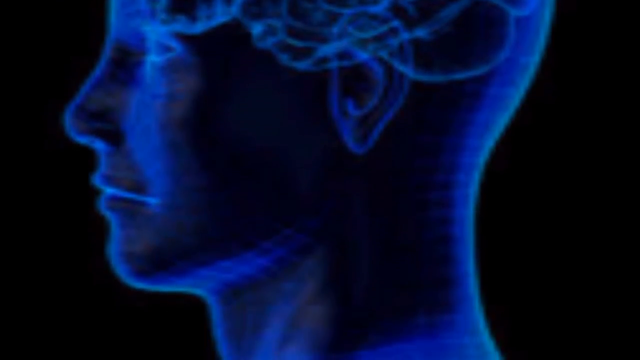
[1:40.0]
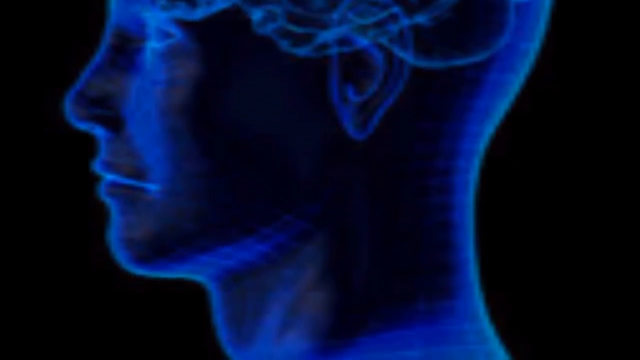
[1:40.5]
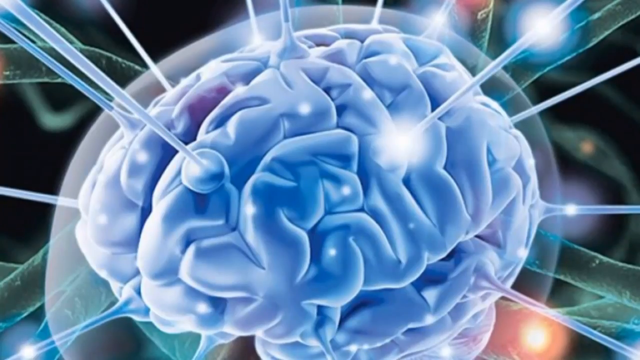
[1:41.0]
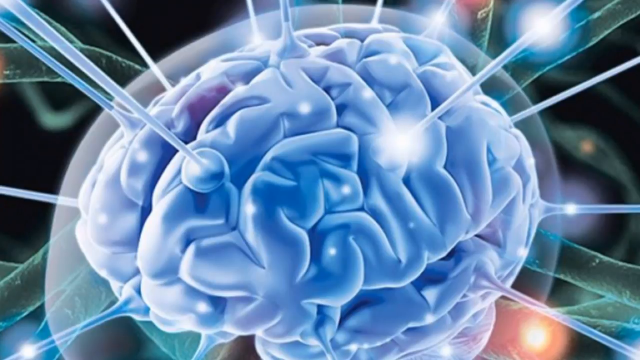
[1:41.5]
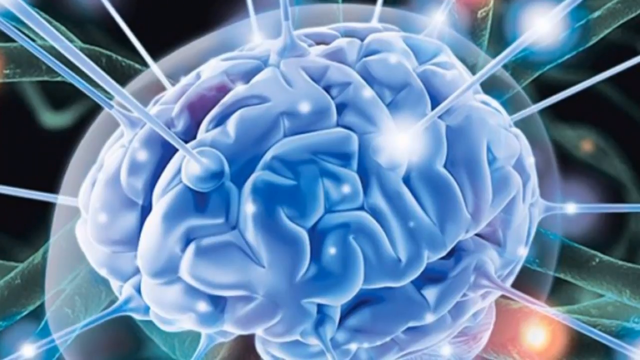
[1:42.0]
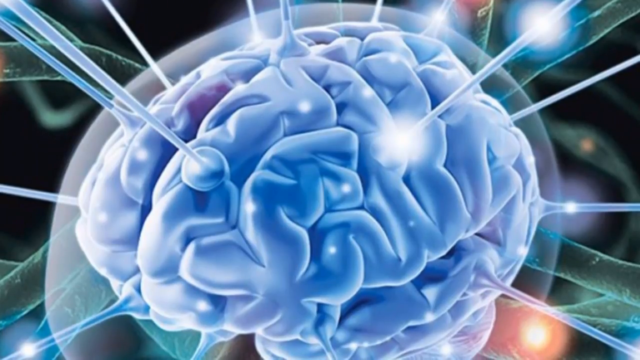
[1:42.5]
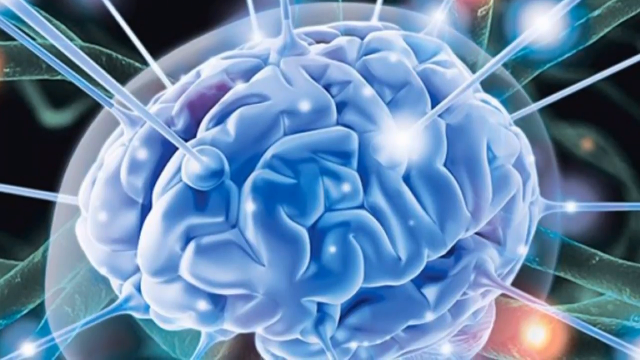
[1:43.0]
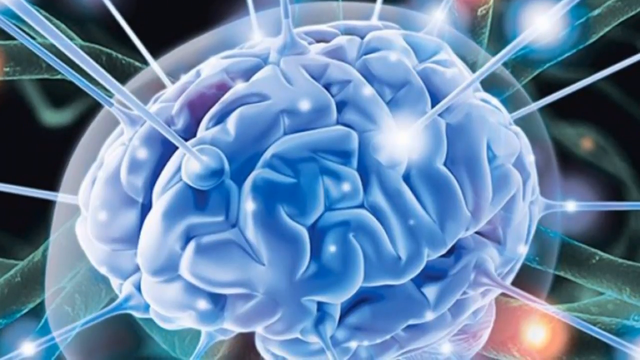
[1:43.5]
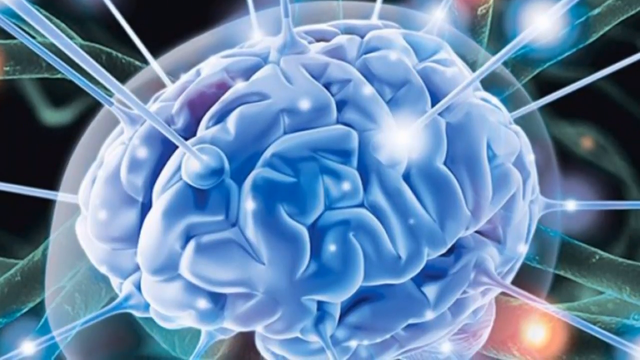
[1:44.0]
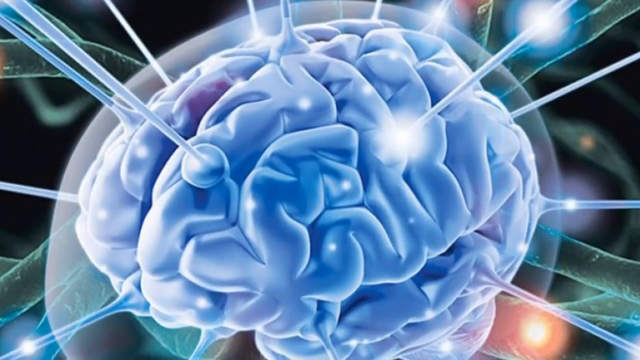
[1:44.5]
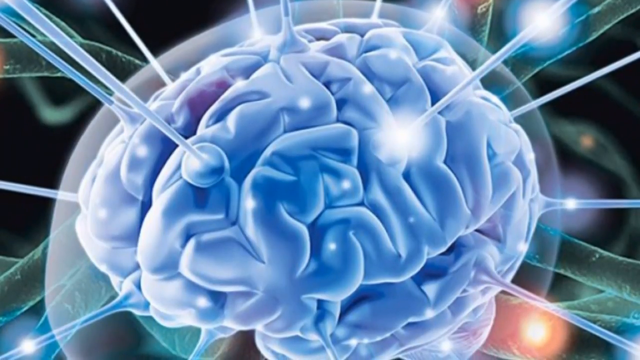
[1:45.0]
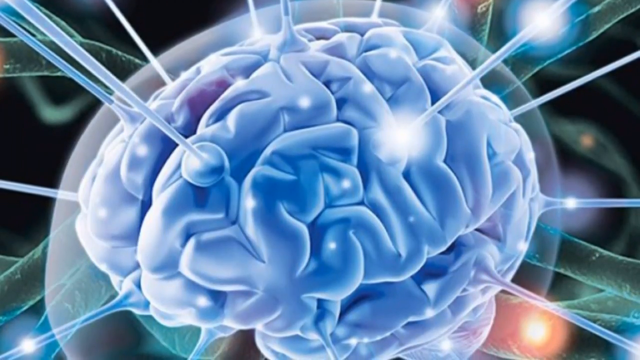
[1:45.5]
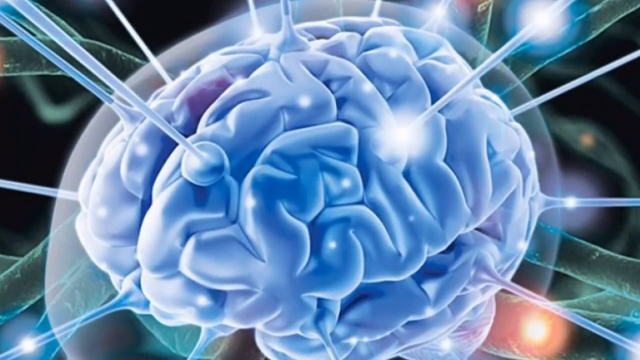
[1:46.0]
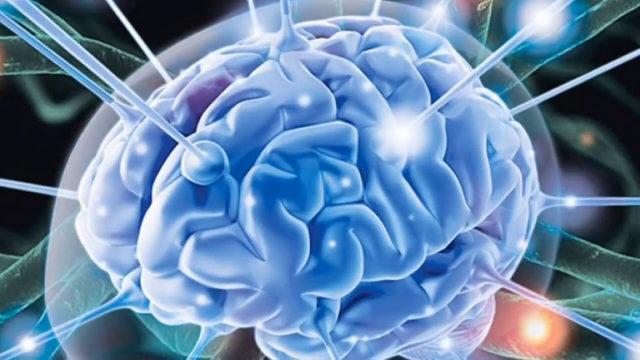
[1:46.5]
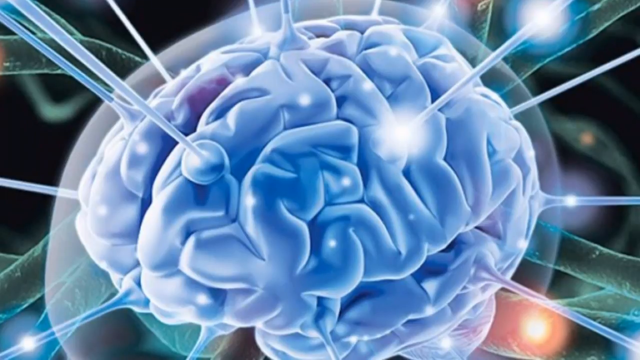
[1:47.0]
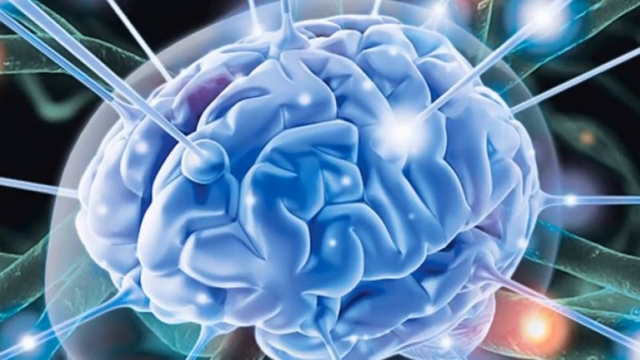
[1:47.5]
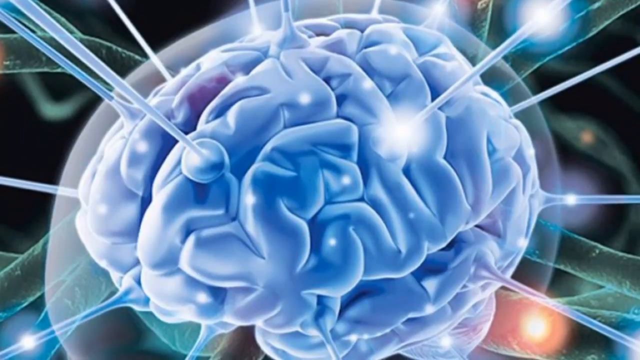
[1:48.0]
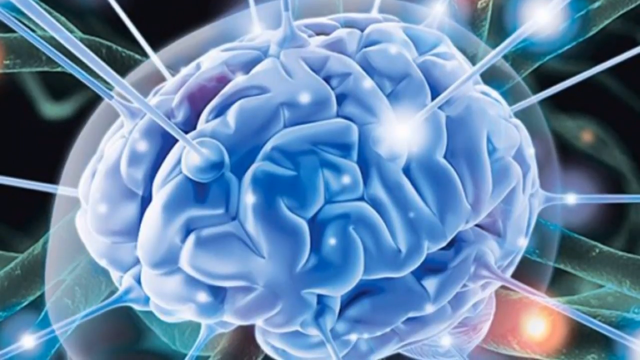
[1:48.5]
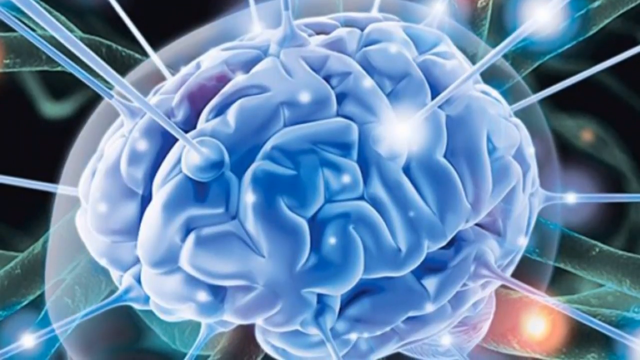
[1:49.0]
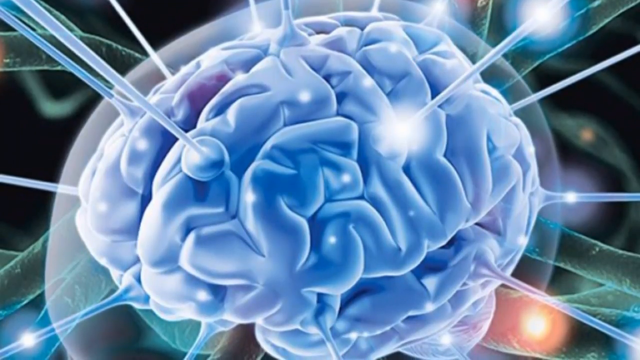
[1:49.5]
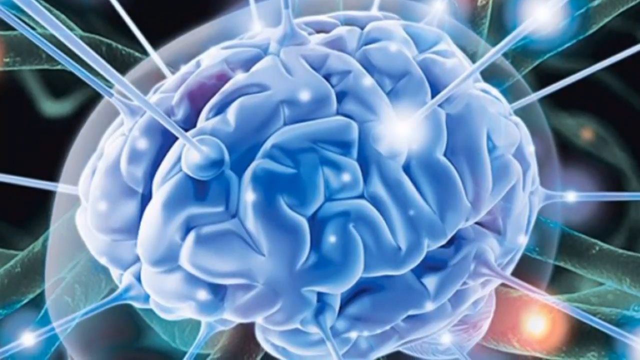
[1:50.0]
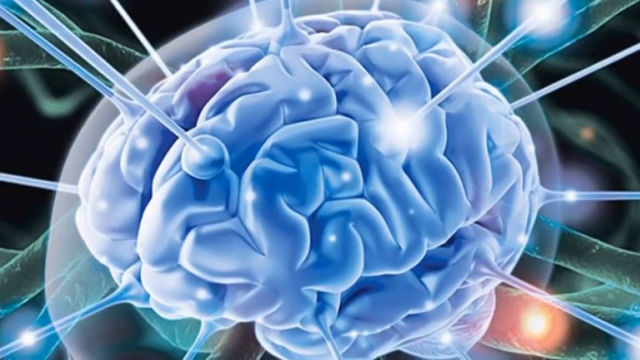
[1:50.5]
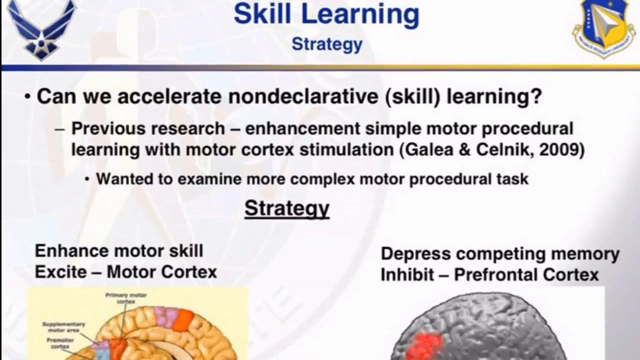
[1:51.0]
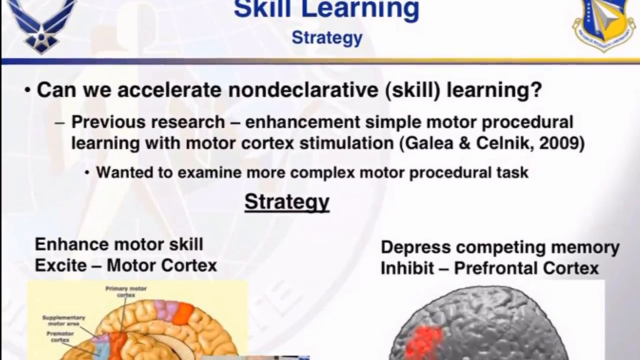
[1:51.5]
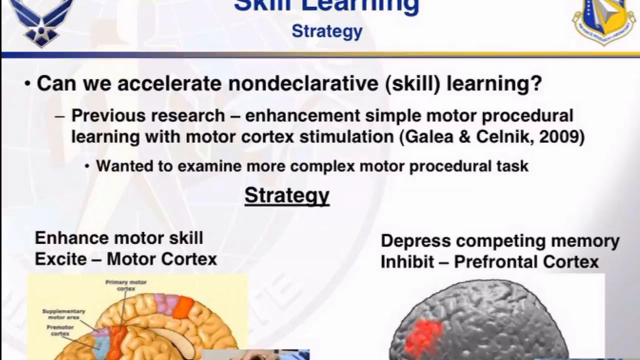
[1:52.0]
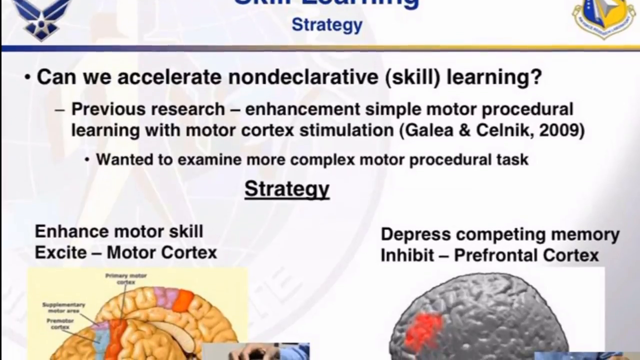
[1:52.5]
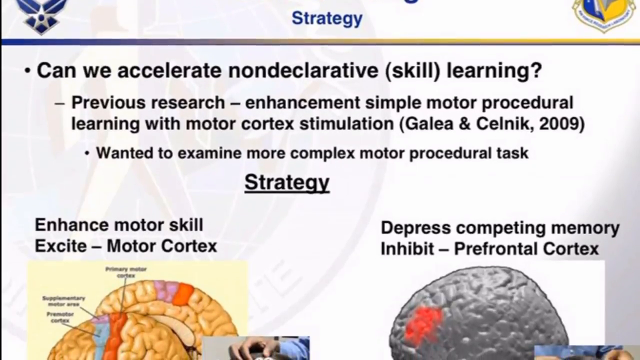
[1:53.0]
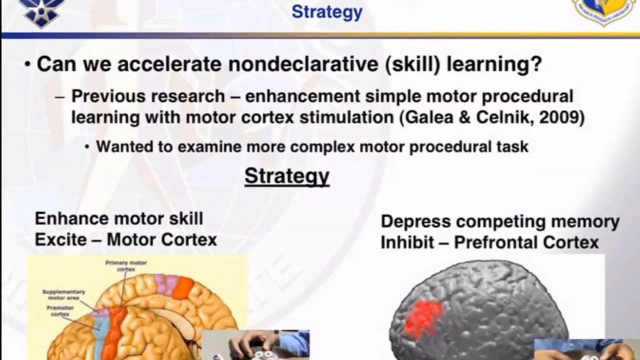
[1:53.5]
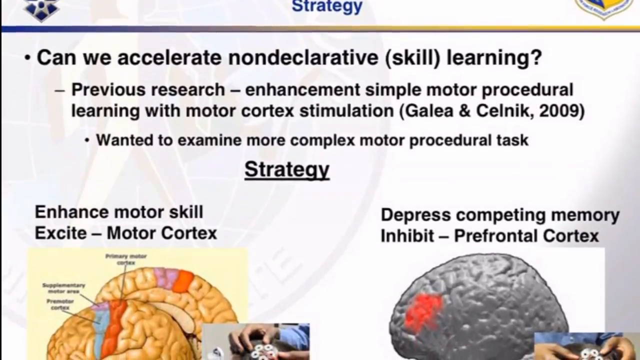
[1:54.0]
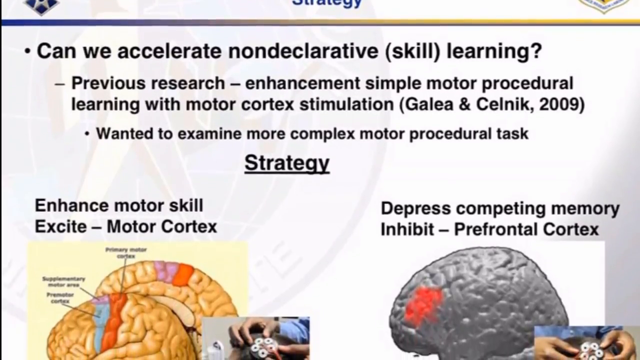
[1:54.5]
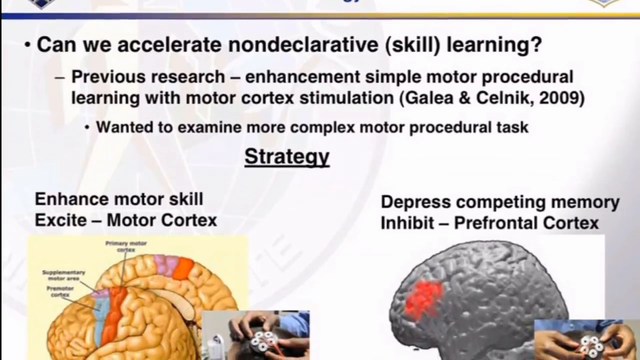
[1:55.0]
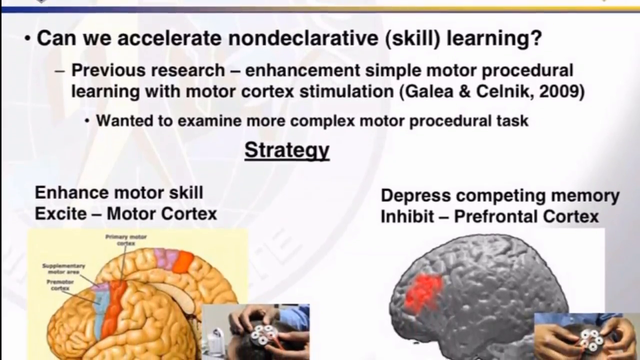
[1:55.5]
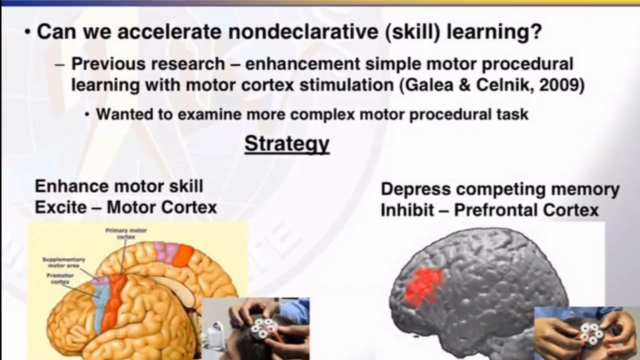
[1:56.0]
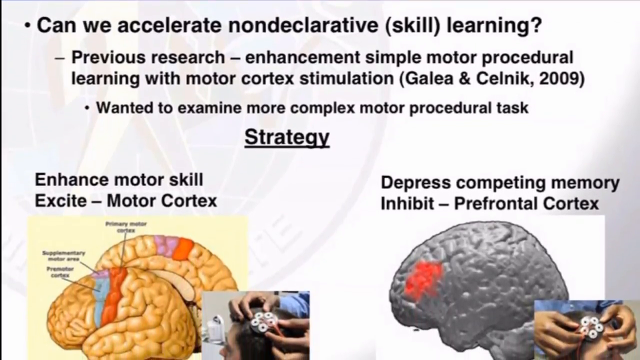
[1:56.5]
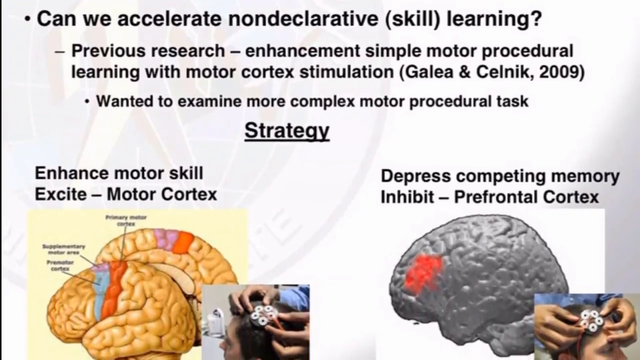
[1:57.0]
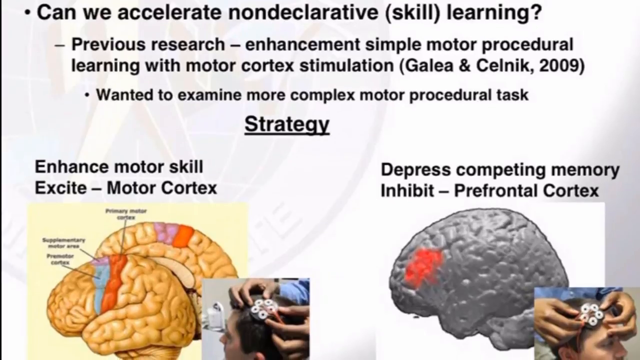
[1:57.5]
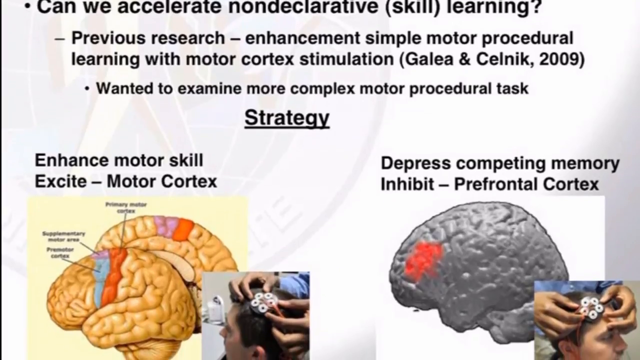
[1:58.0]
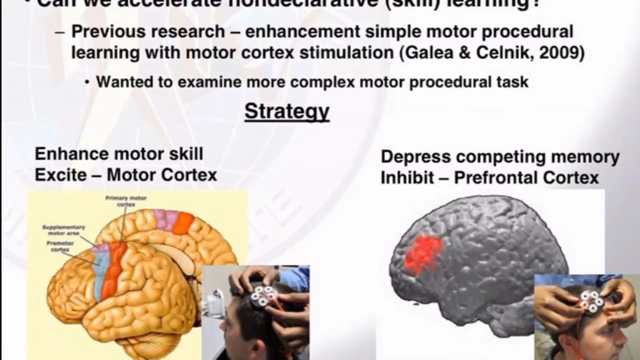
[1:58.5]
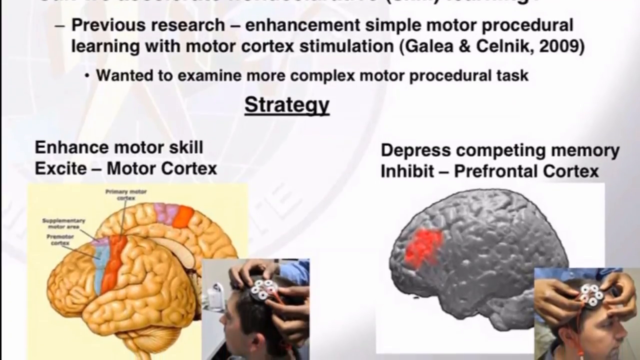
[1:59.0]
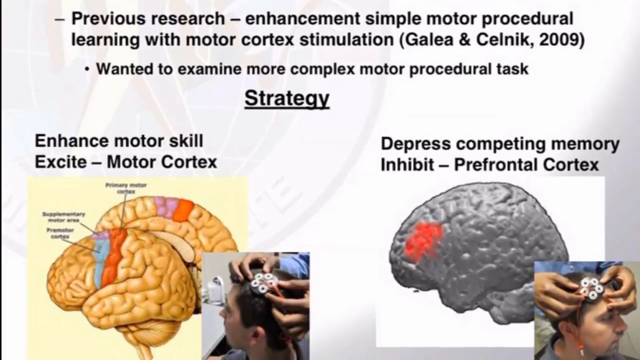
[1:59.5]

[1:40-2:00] A very detailed brain with spikes coming out of it appears, fairly zoomed in. The spikes are the same color as the brain, a mix of light purple but mostly bluish. There are some bright light orbs in the background on the right-hand side, and dark background shows in certain areas between the spikes. The next image is a document titled "Skill Learning". Below the title it reads "can we accelerate non-declarative skill learning?" followed by "Previous research, enhancement, simple motor procedural, learning with motor cortex stimulation", with an example of that to the right. Below is a note that says "wanted to examine more complex motor procedural task." There is a strategy, and the camera zooms down to a diagram of two different brain types. Another image of a brain follows.